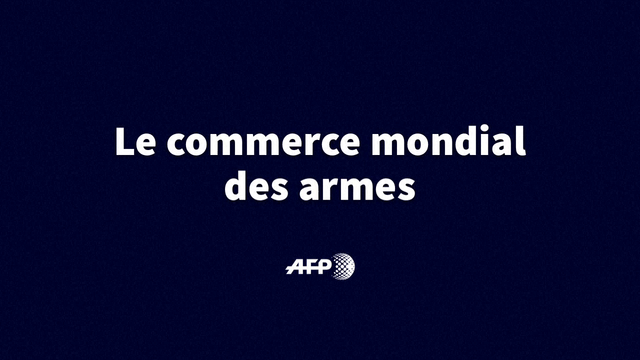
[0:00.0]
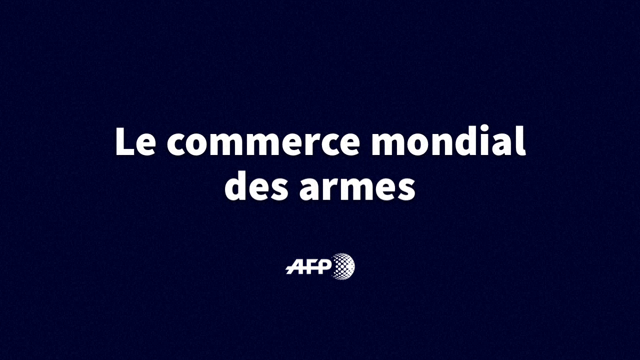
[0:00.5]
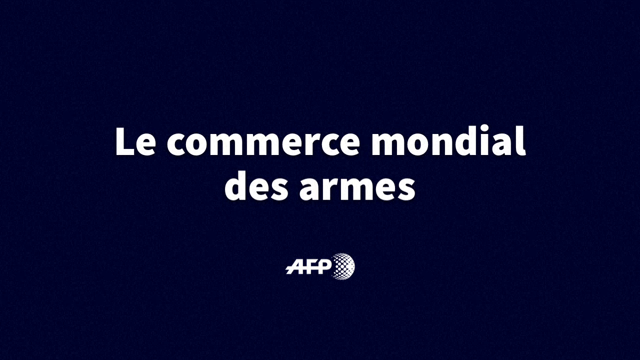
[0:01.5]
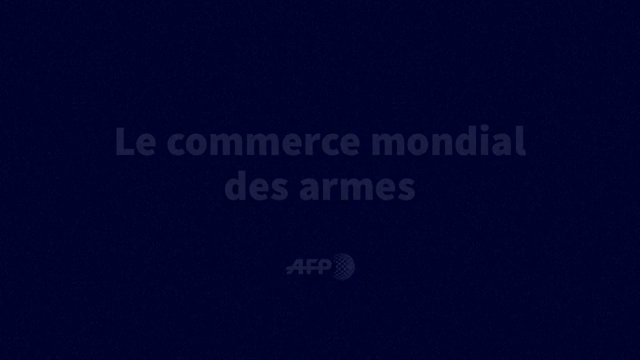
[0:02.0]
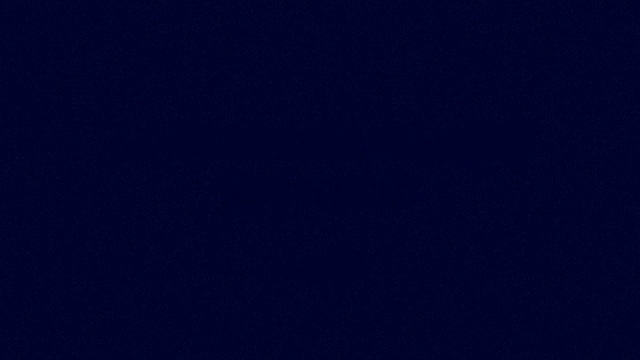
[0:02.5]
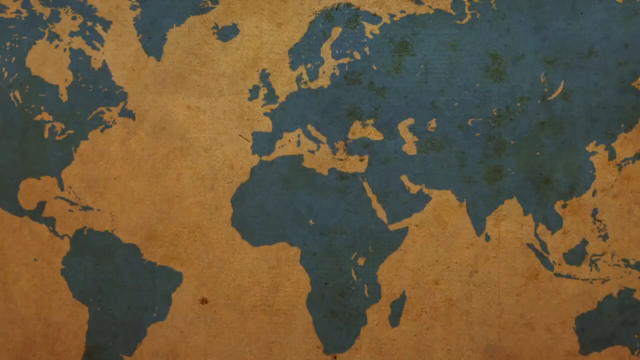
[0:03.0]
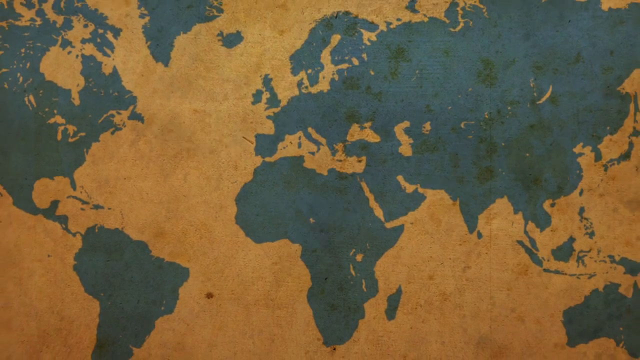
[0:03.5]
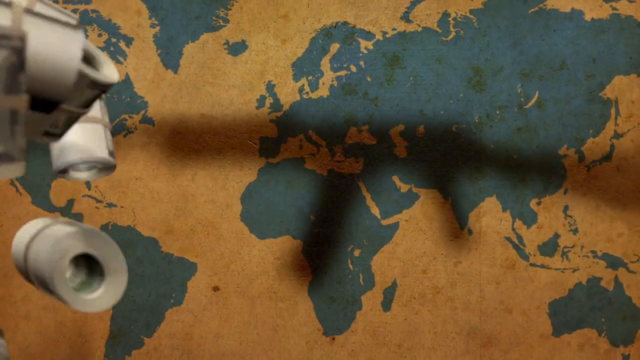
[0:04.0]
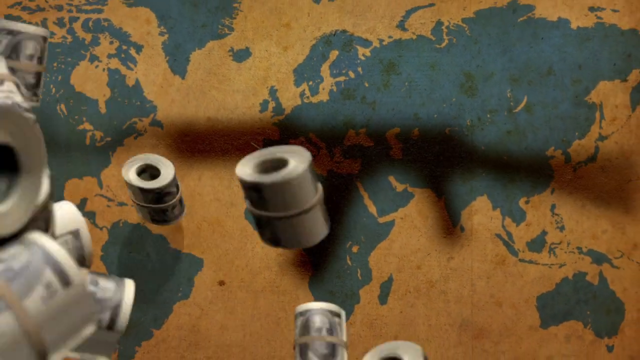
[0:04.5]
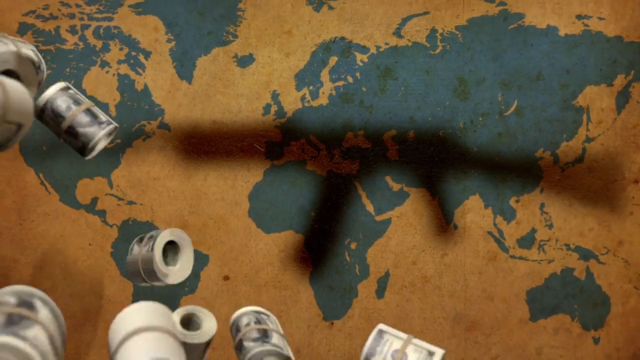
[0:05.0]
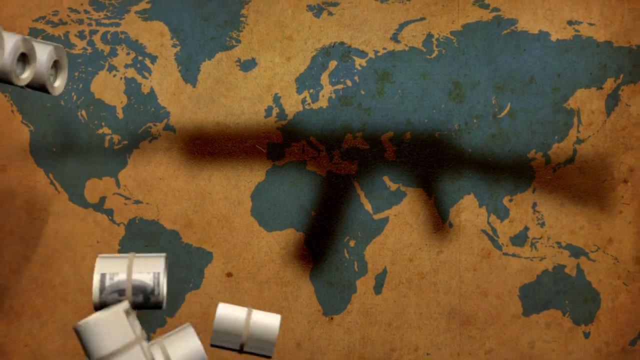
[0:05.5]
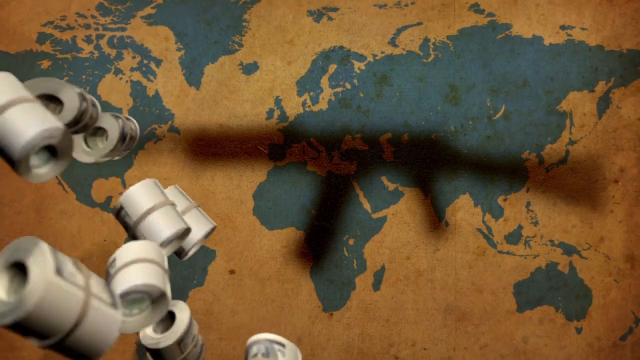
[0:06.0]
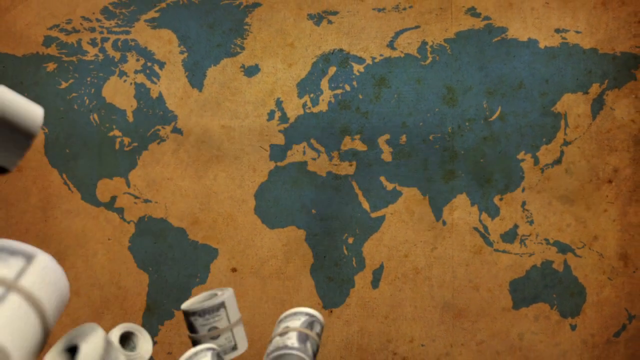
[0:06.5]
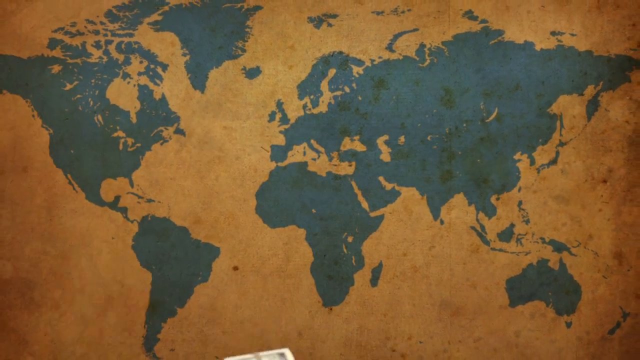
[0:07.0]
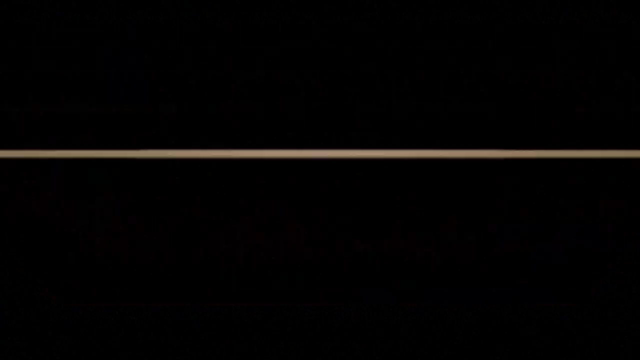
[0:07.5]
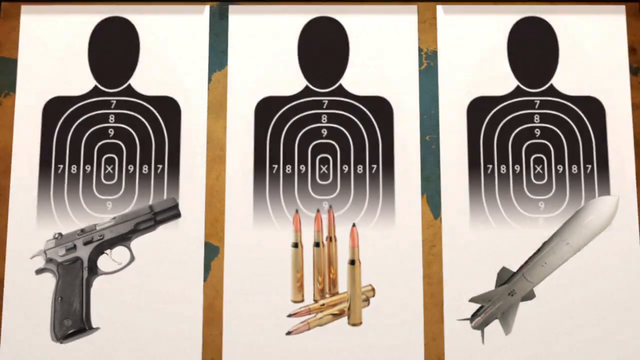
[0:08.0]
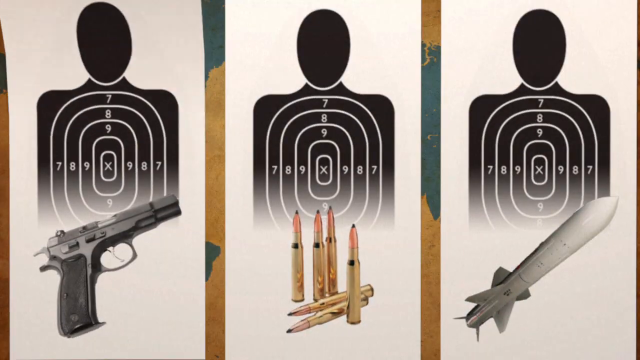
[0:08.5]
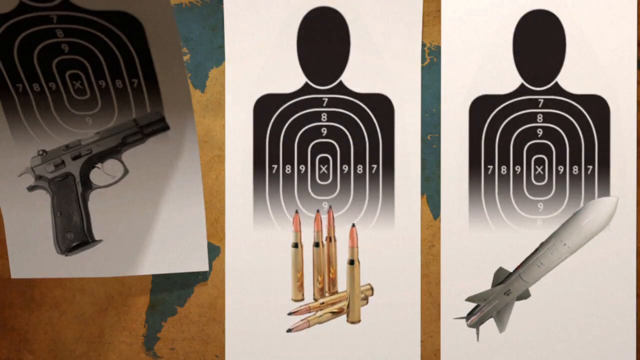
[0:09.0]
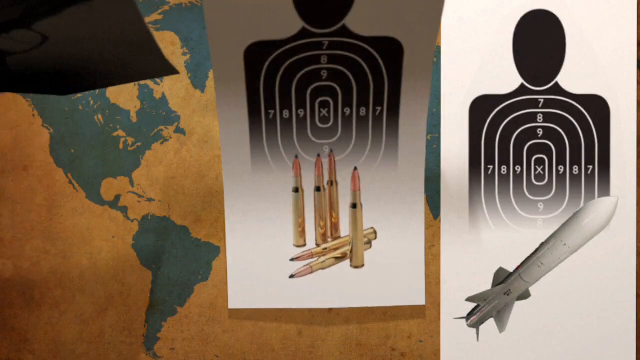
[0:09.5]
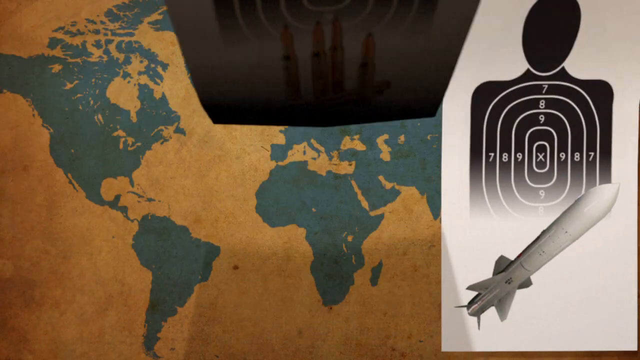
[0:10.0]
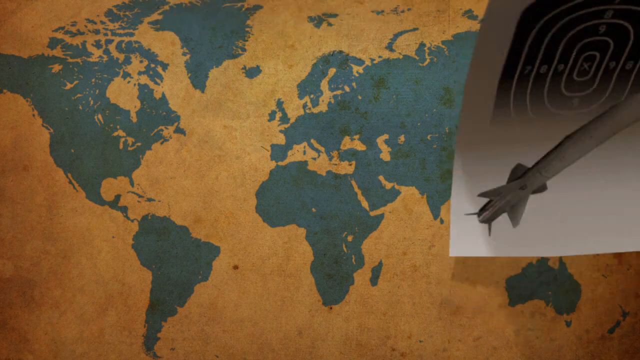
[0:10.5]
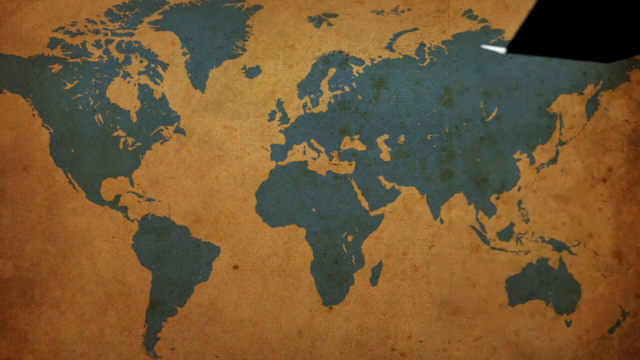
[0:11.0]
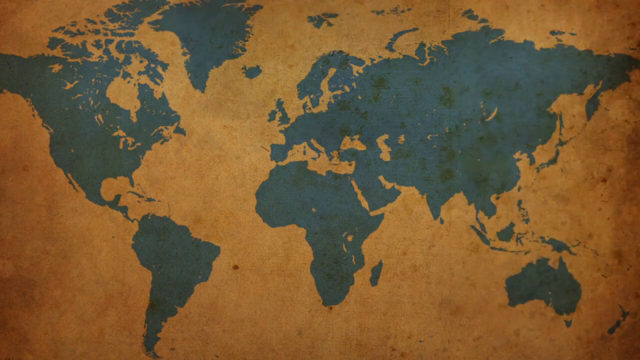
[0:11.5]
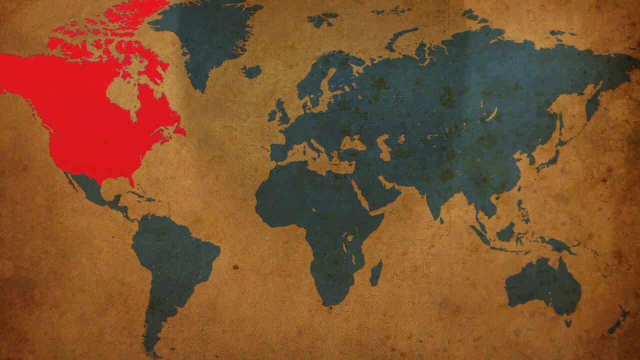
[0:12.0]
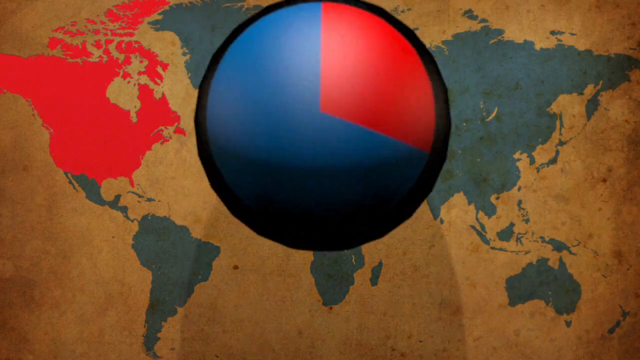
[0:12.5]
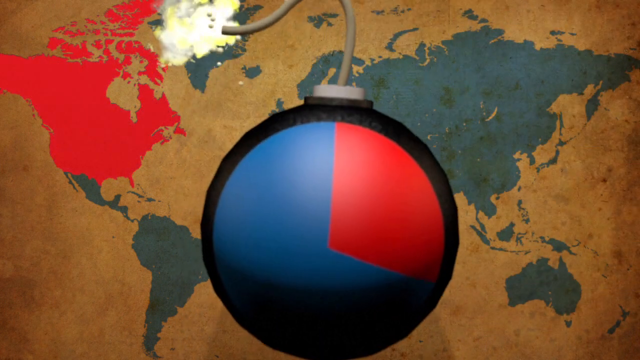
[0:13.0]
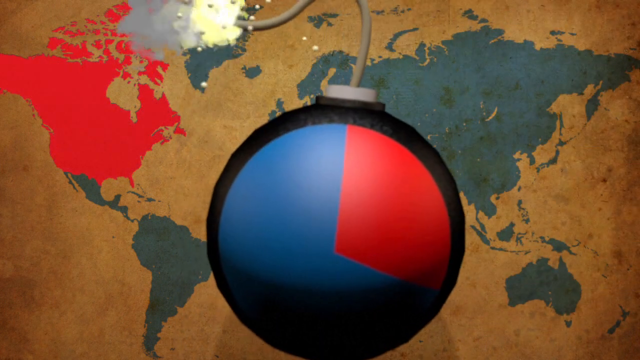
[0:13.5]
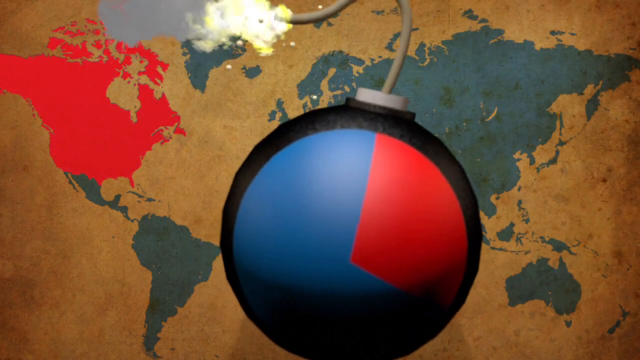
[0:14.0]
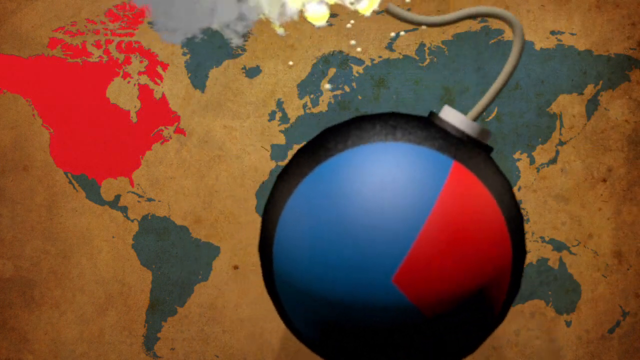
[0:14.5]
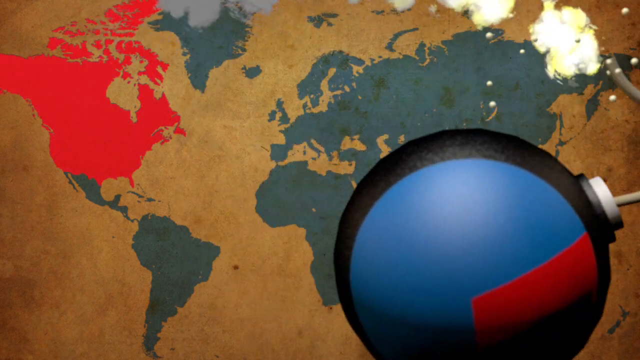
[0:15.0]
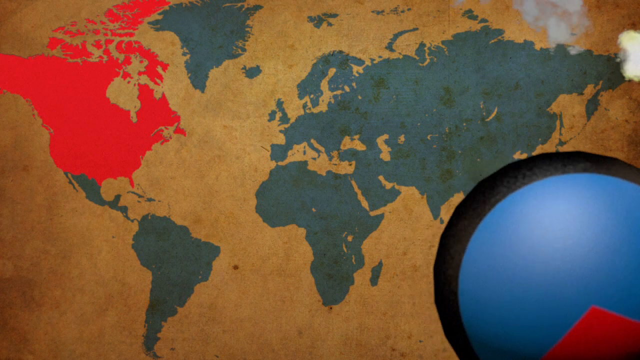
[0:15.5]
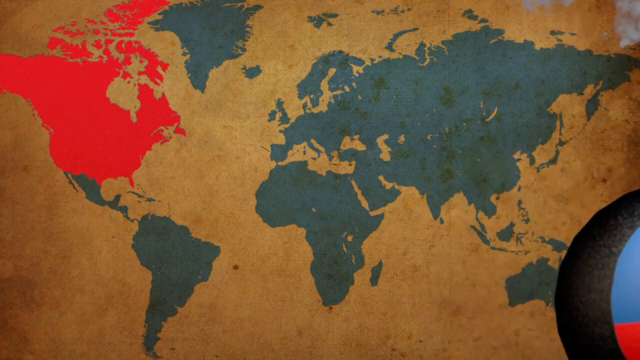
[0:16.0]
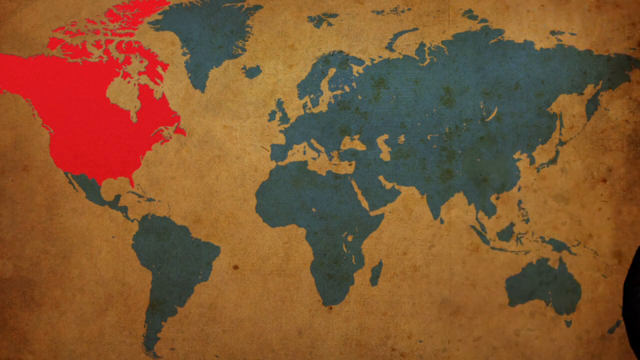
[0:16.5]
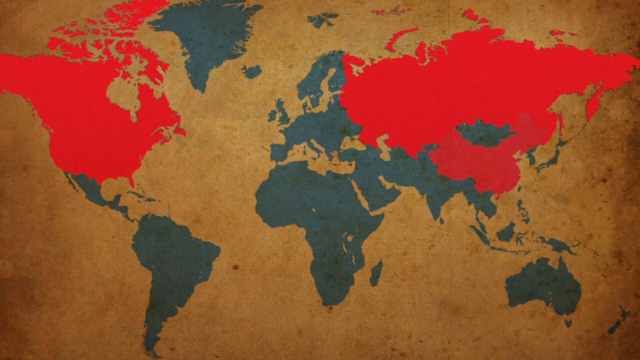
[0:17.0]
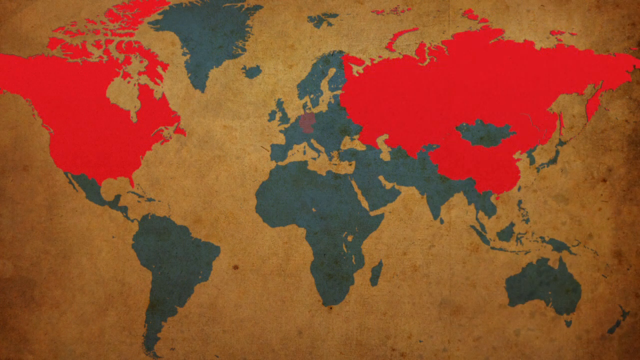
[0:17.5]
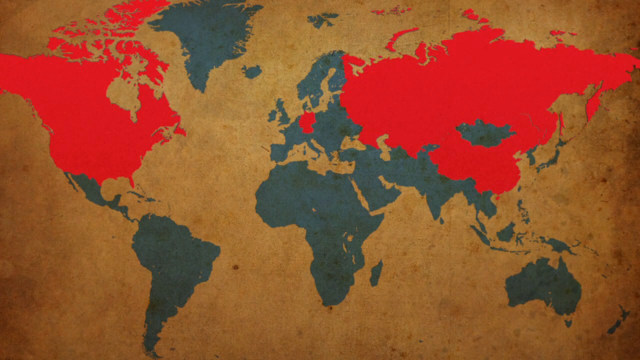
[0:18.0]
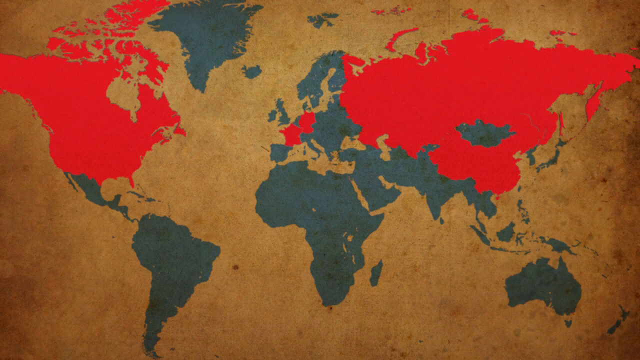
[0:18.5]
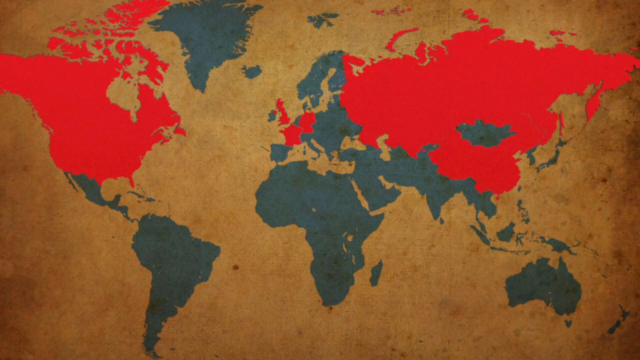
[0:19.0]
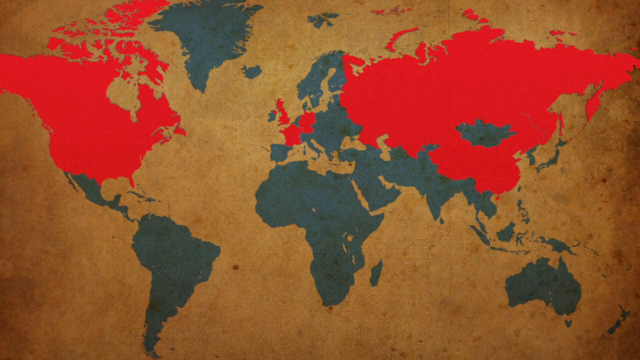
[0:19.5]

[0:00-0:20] A slide shows white text in a foreign language on a navy blue background. It cuts to an orange and blue map; the blue parts appear to be the continents of Earth and the orange parts seem to be the ocean. Next there is what looks like the black silhouette of a man with a white target on it, with a gun underneath. To the right of that is another silhouette of a man with a target, with bullets underneath. On the right side is another silhouette of a man with a white target, and underneath it is what looks like a white missile. The map then appears again, this time highlighting North America in red, then Asia, and then parts of western Europe in red as well.